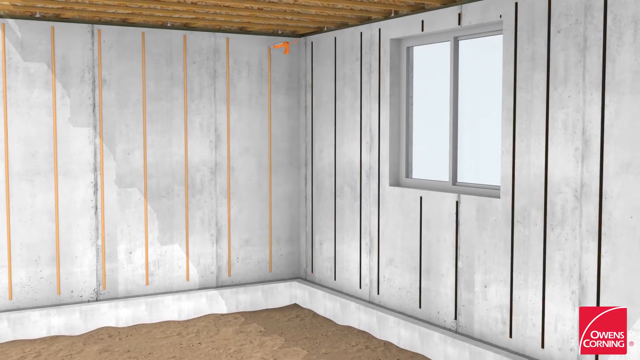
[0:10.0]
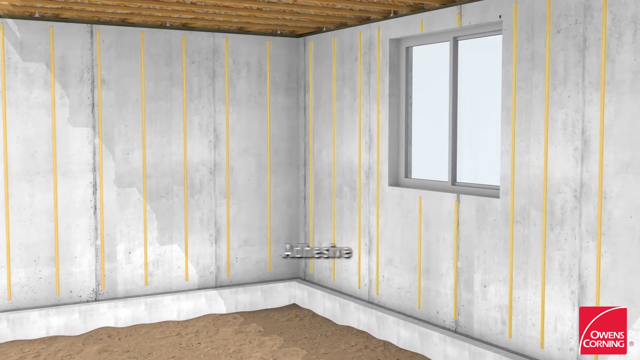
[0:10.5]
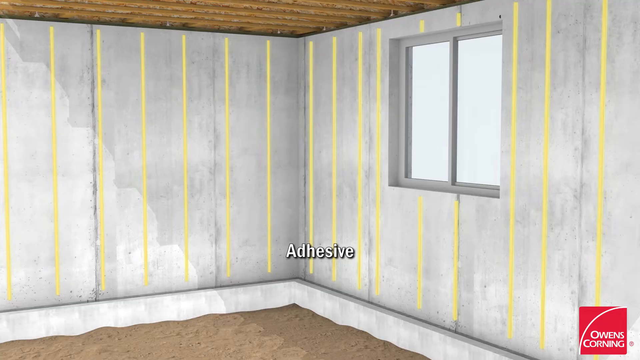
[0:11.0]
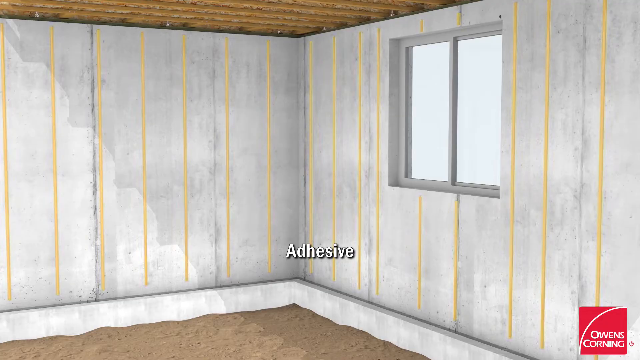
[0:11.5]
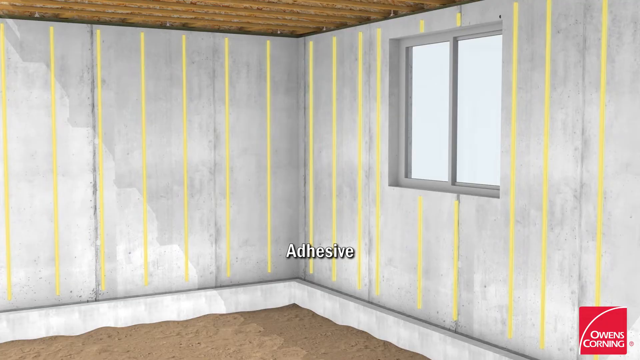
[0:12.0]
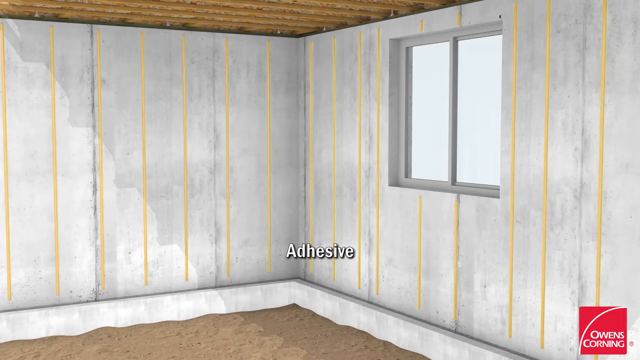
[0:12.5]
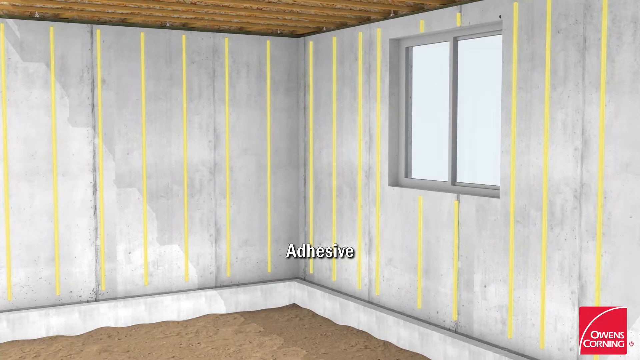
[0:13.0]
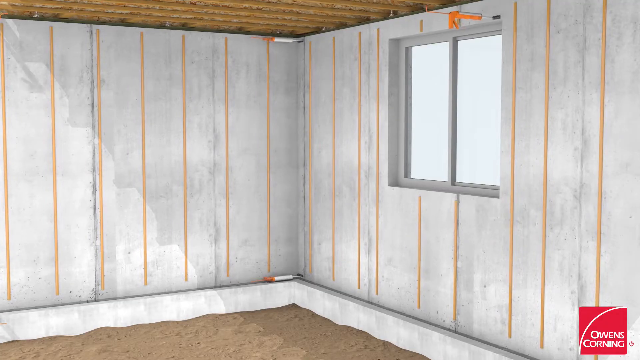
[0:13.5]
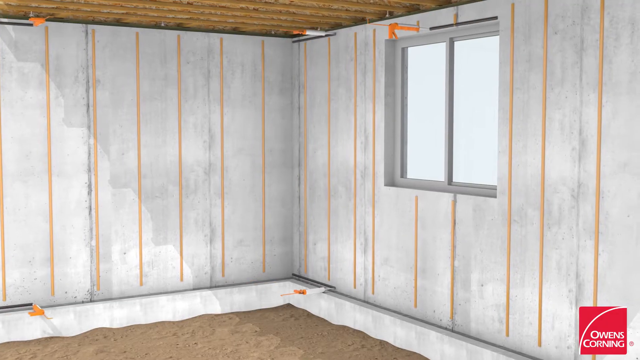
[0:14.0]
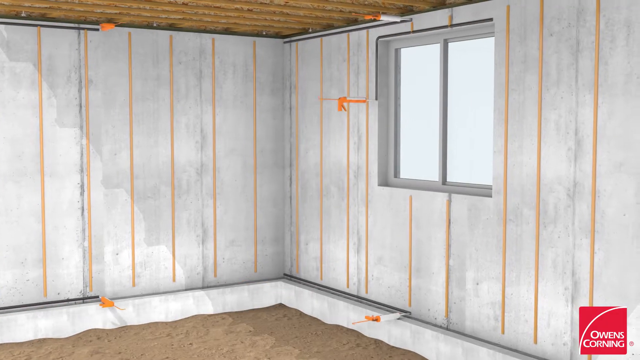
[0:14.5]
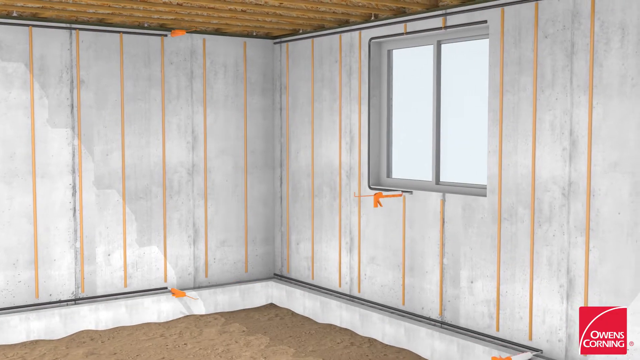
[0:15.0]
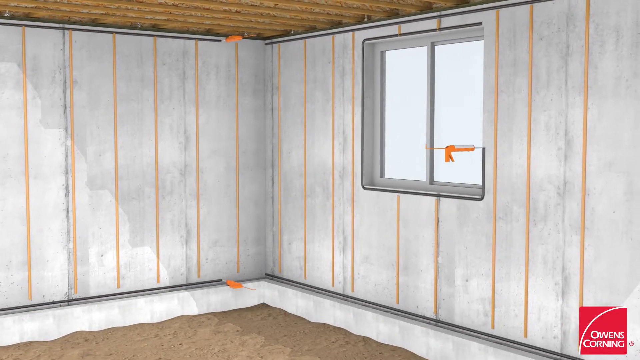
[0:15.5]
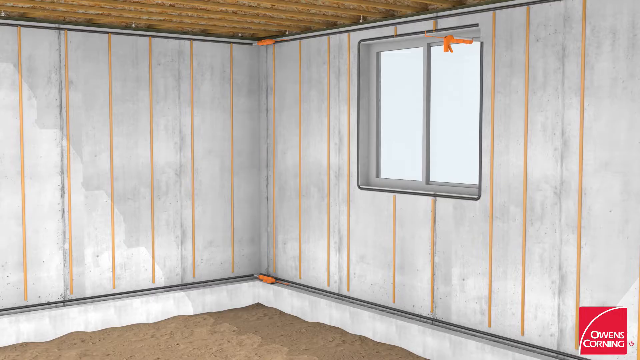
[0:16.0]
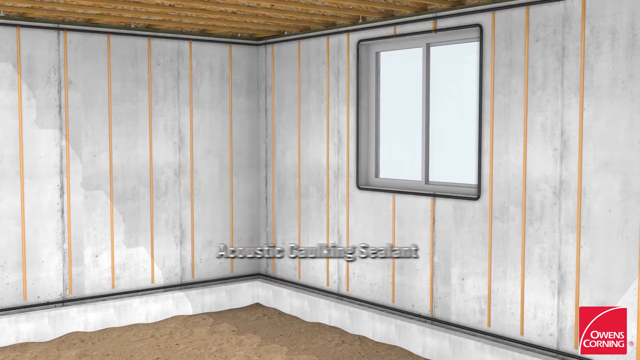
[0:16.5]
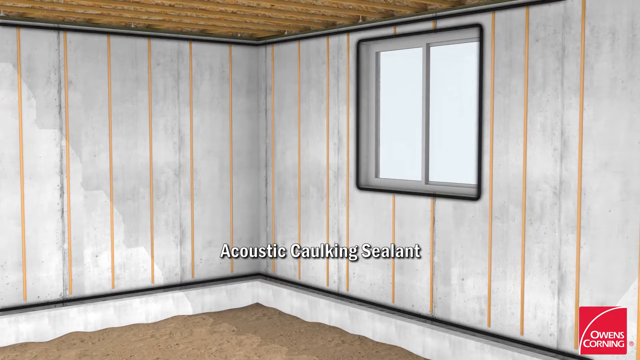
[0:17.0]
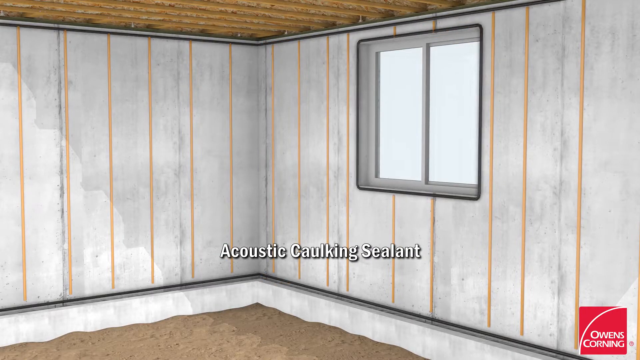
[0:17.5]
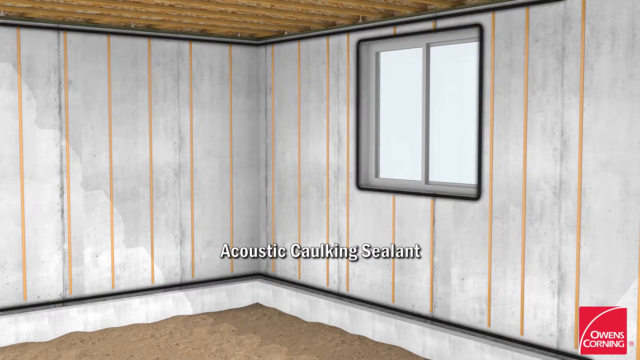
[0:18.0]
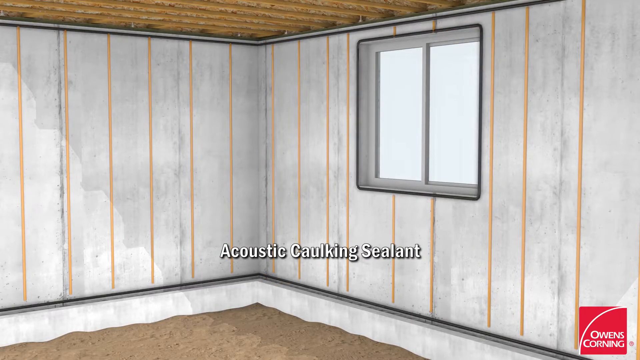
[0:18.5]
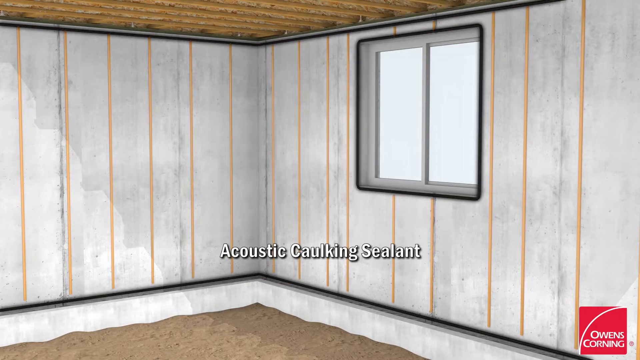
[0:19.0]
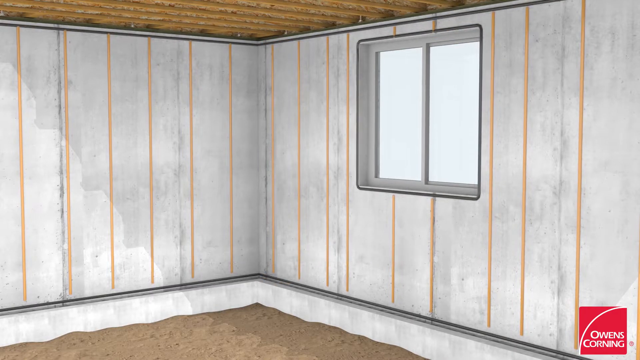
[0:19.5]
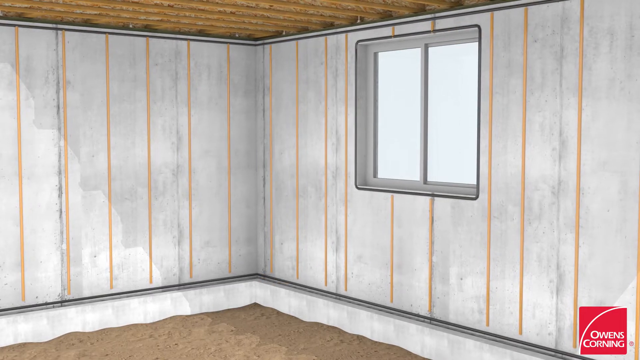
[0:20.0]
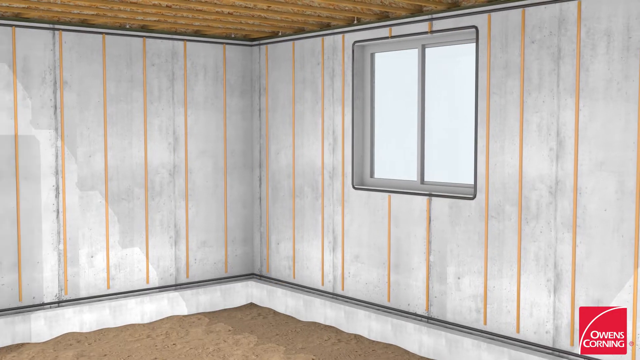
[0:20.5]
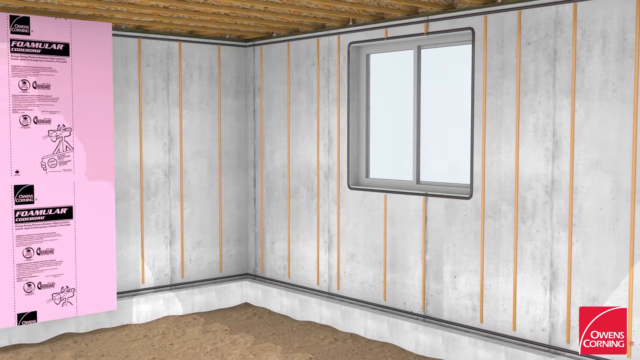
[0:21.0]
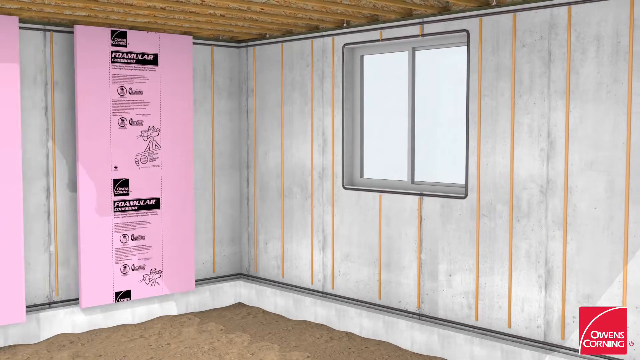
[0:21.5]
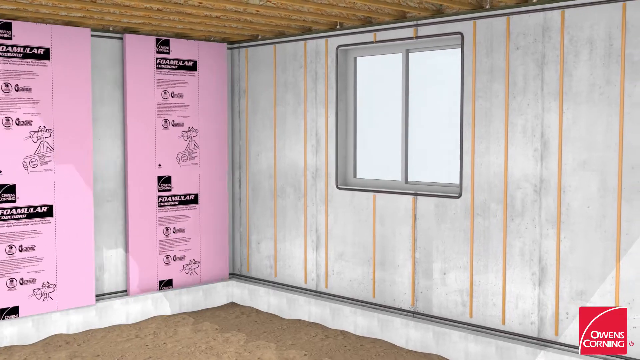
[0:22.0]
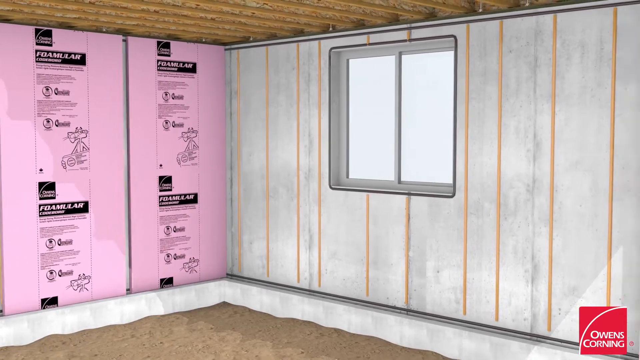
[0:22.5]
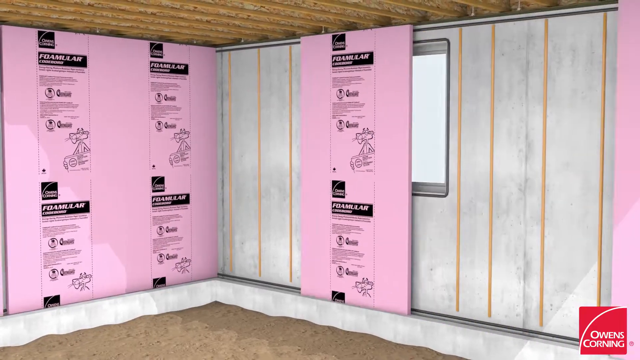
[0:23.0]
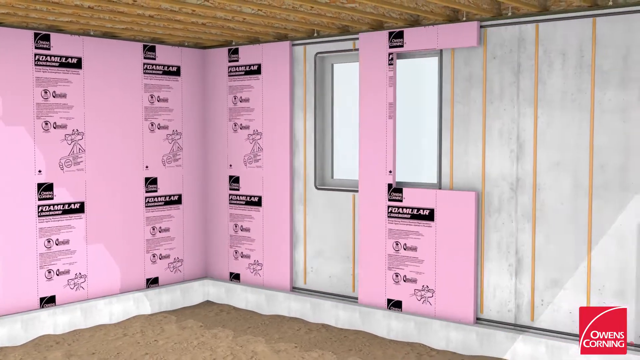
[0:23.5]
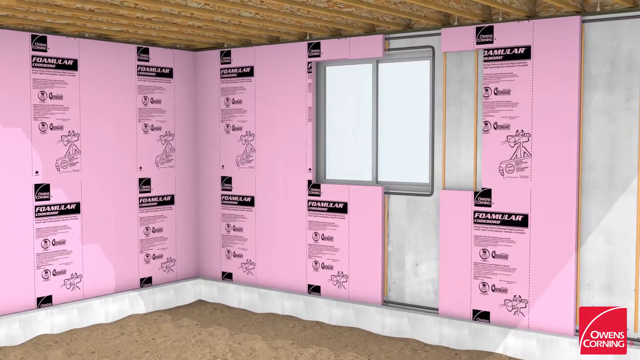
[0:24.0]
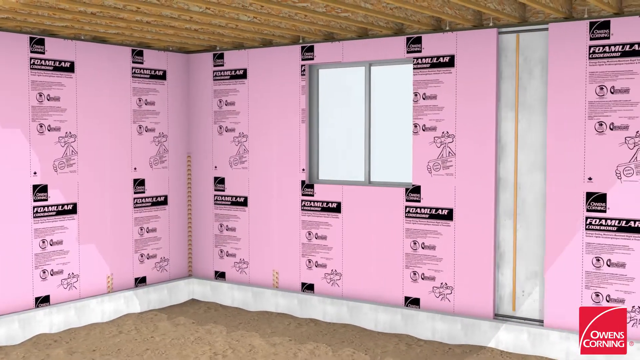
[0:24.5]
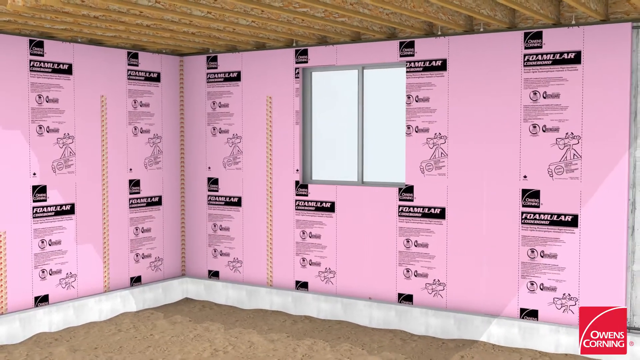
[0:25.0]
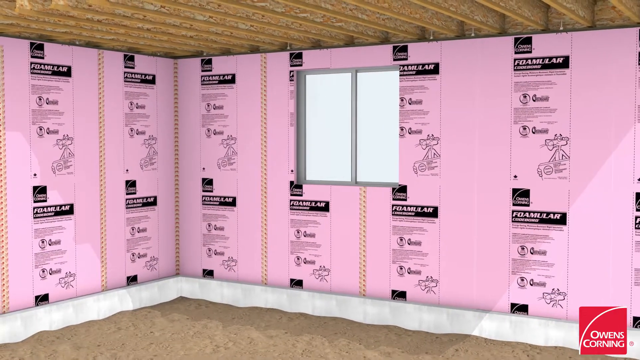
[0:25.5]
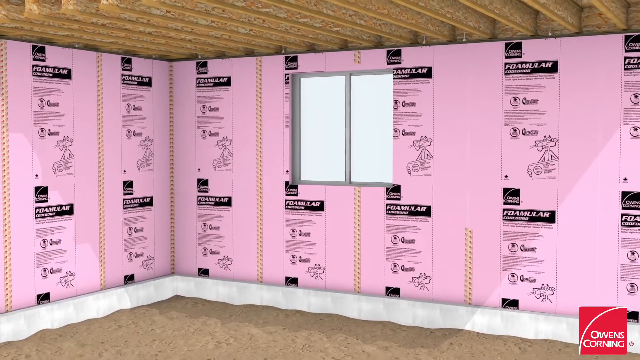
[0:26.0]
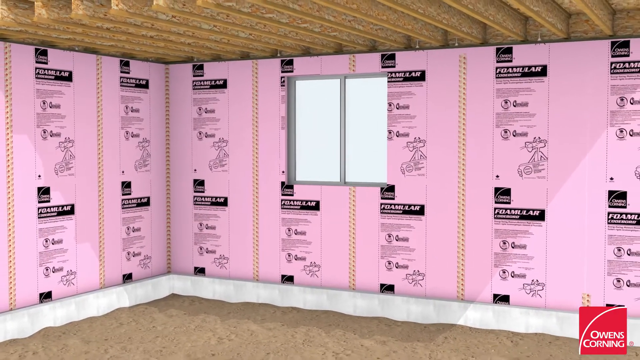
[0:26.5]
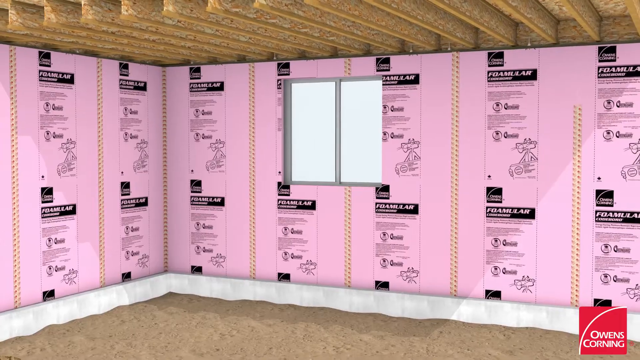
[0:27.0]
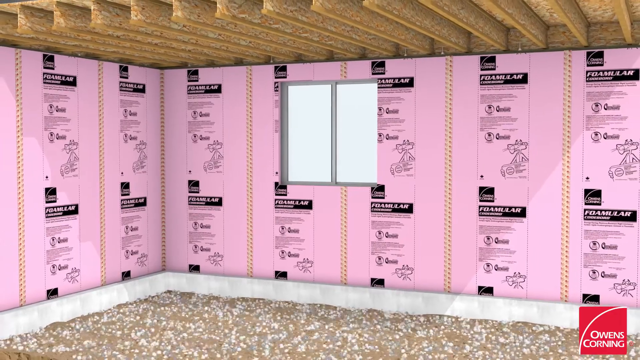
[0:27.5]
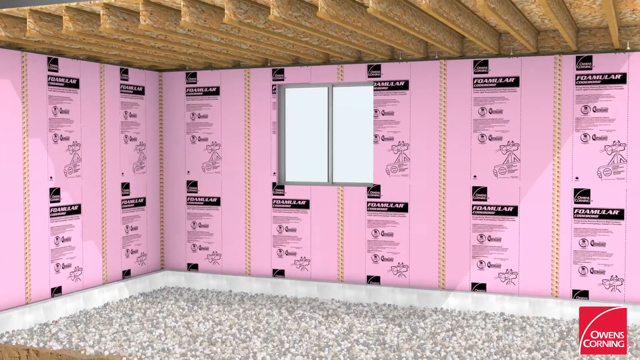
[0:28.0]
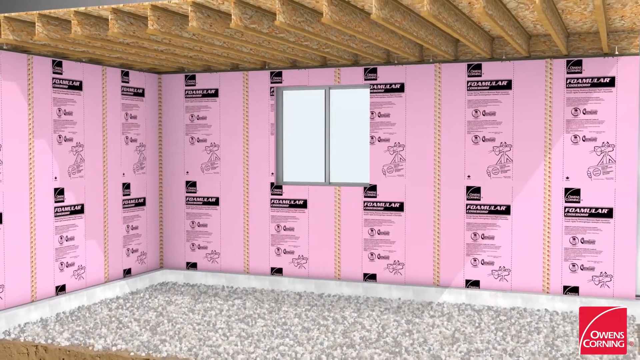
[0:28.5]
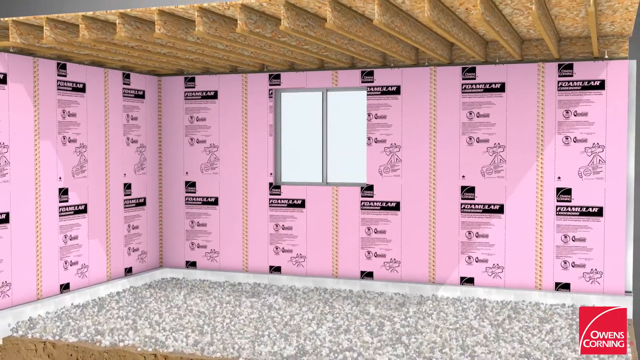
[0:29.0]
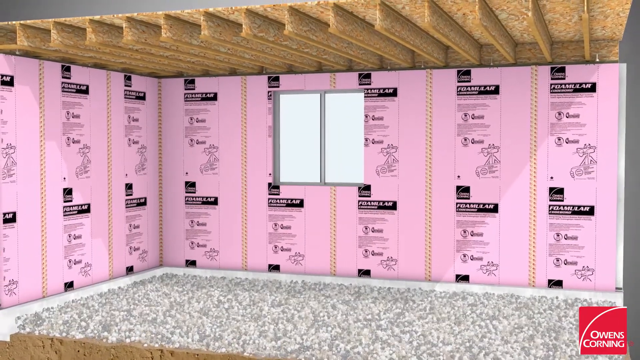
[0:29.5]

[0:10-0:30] Text reads "basement wall adhesive" over a 3D-rendered room interior showing concrete, and sealant is applied with lines throughout. A window has two separate opening sections. Pink insulation is laid into the room and then peeled away, and the view zooms out a bit to show more insulation being laid on the floor. The Owens Corning company name is in the corner of the graphics. "Vapor retarder" then appears; the product is for keeping moisture out of a dwelling, and the video shows how it is installed. The roof beams are shown, floor framing goes up, and insulation goes up. Pink pads are put in between the wall beams, fitted around piping in the wall, and flattened. Another barrier is put up and nailed down. The view zooms out, then shows a close-up of the beams as the plastic is installed, with nail guns floating in the air marking where the nails go to seal the membrane to the walls. Drywall is then put in to complete the room.